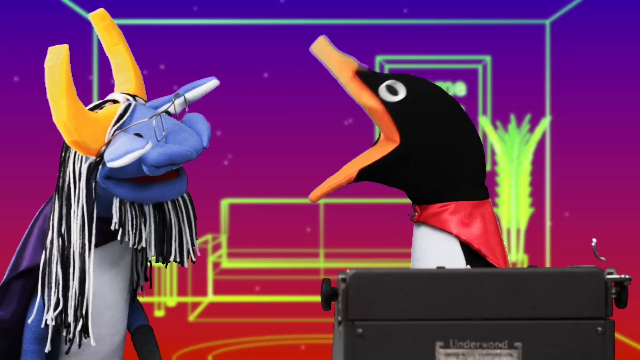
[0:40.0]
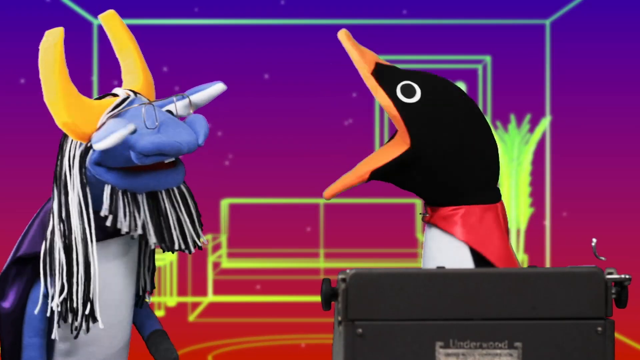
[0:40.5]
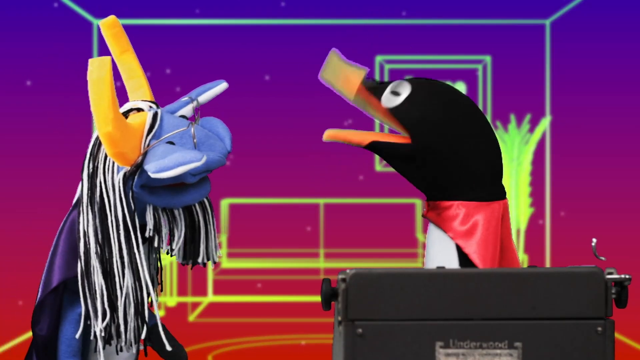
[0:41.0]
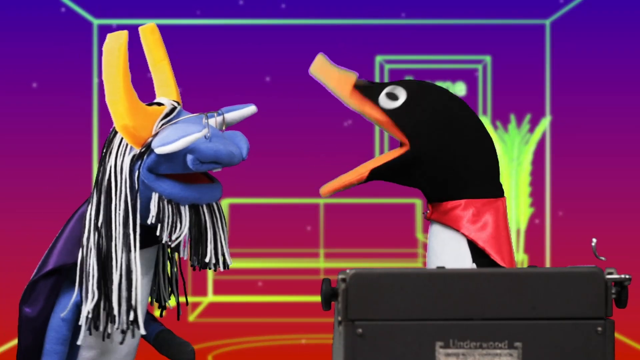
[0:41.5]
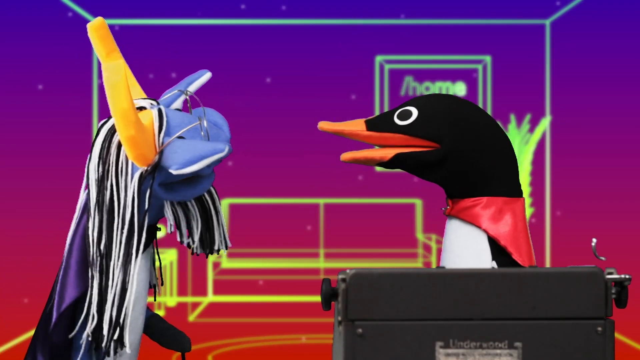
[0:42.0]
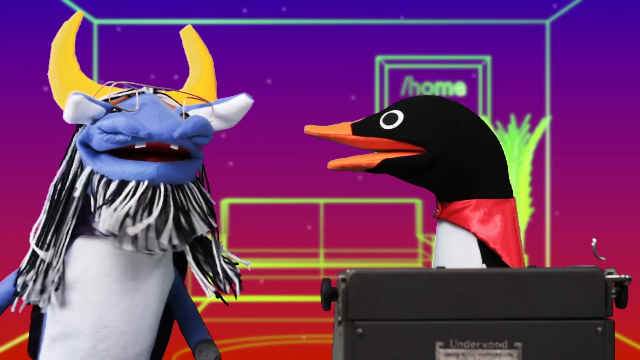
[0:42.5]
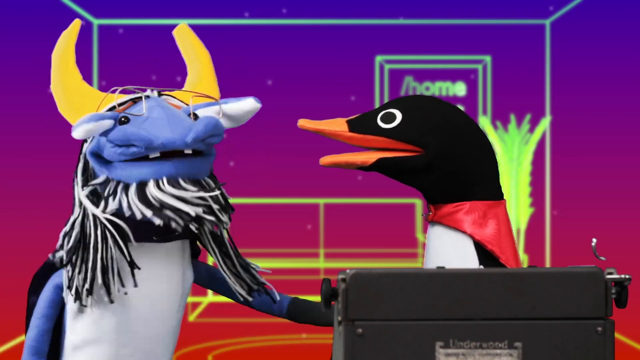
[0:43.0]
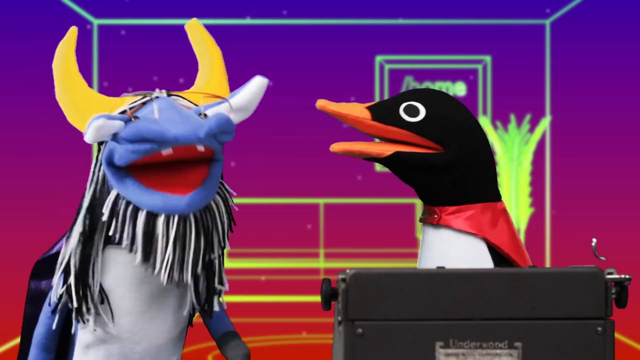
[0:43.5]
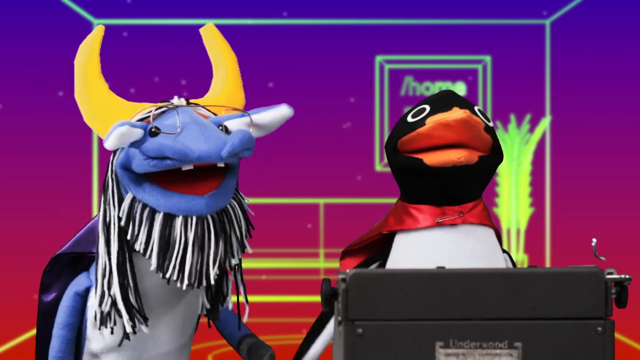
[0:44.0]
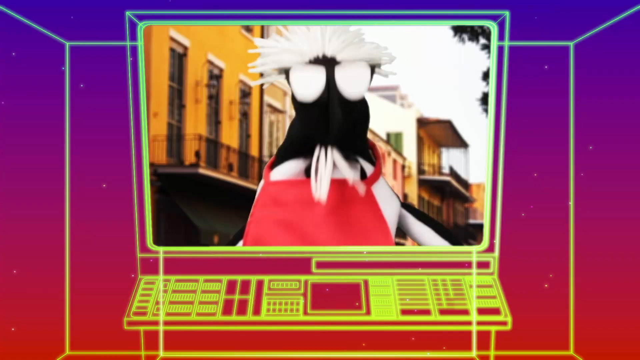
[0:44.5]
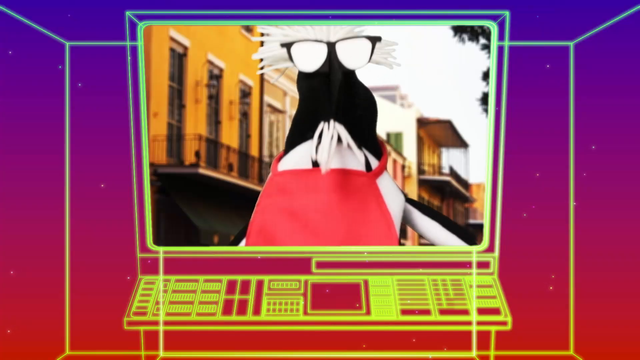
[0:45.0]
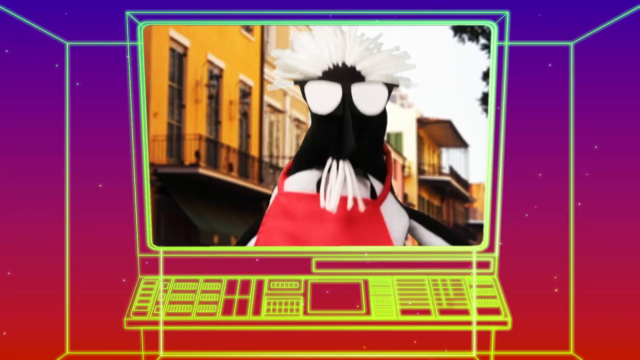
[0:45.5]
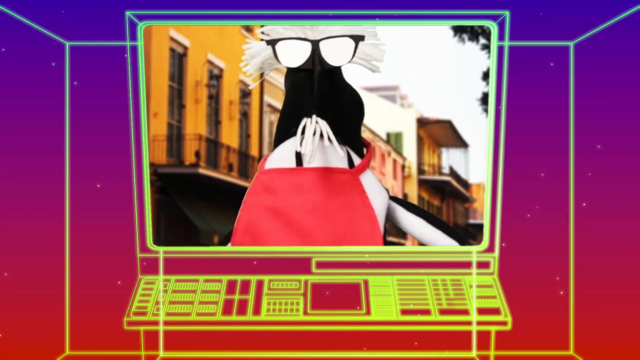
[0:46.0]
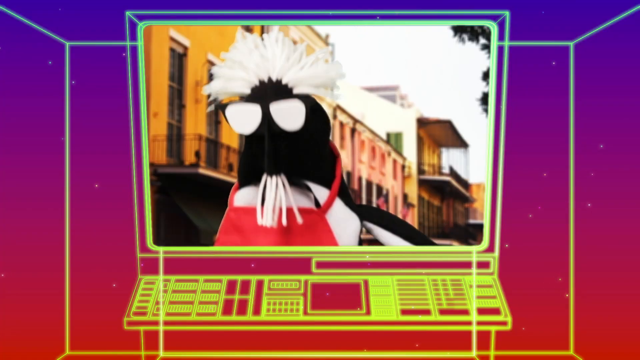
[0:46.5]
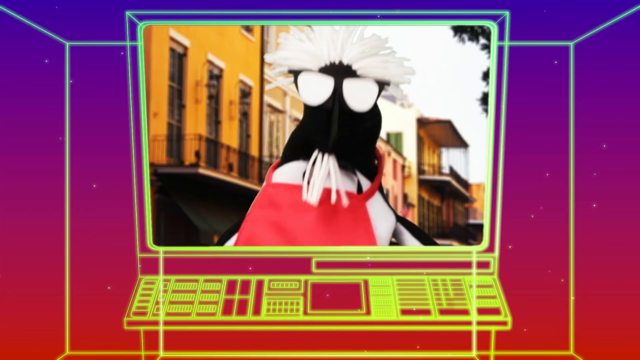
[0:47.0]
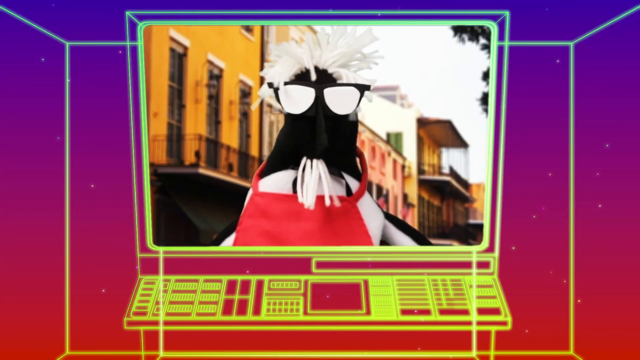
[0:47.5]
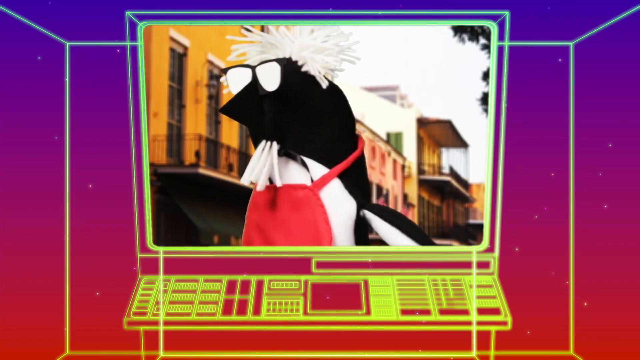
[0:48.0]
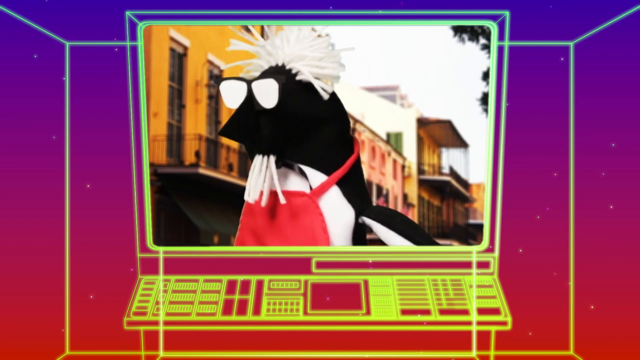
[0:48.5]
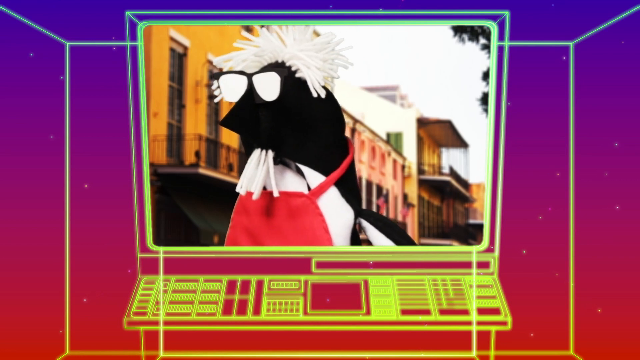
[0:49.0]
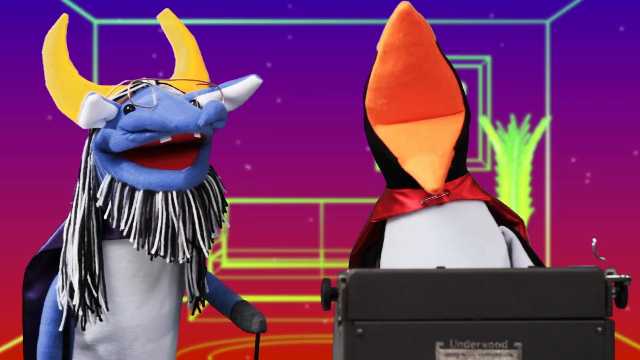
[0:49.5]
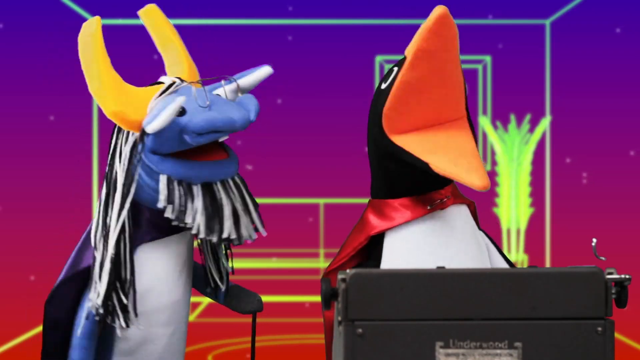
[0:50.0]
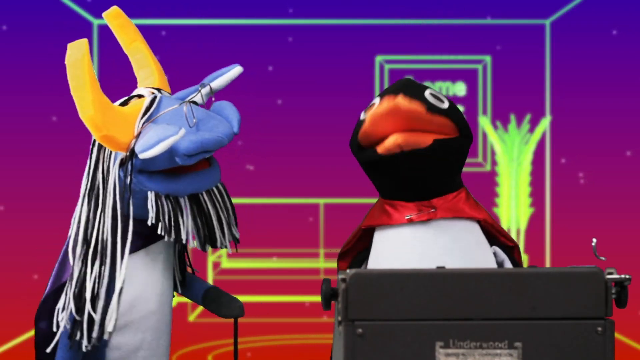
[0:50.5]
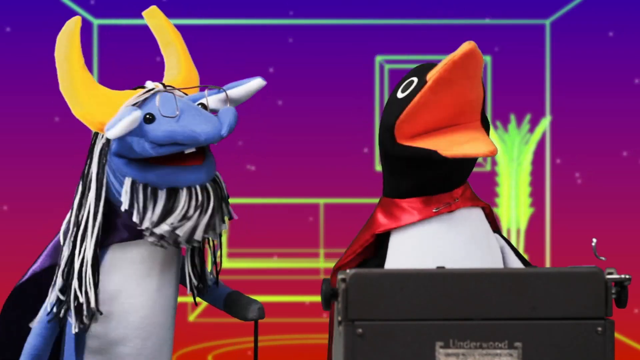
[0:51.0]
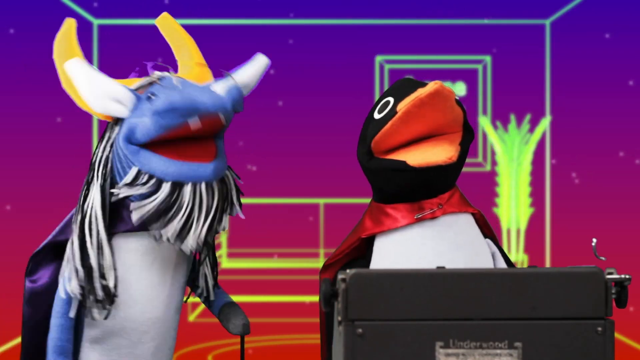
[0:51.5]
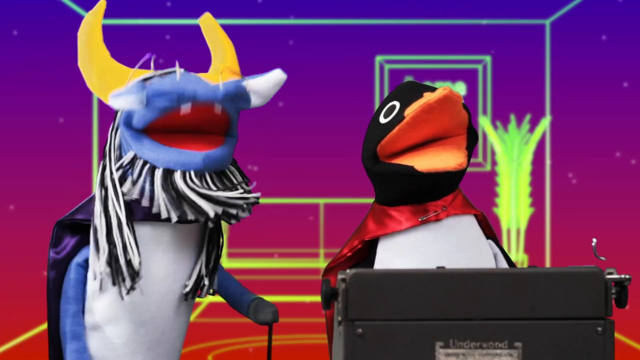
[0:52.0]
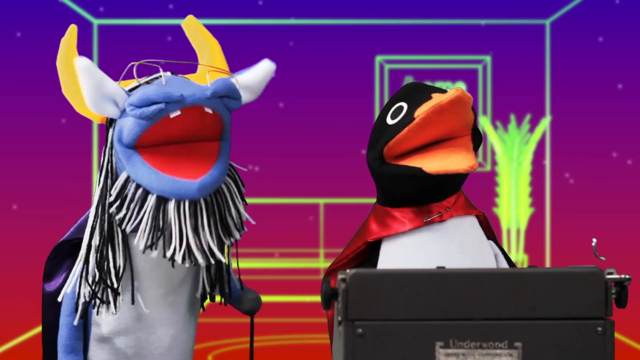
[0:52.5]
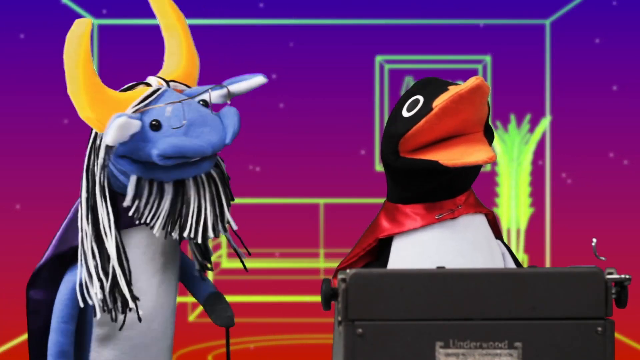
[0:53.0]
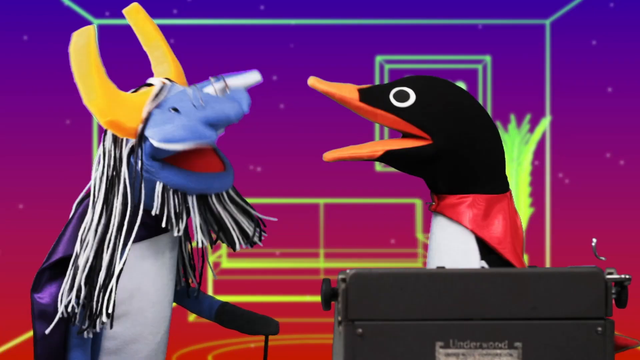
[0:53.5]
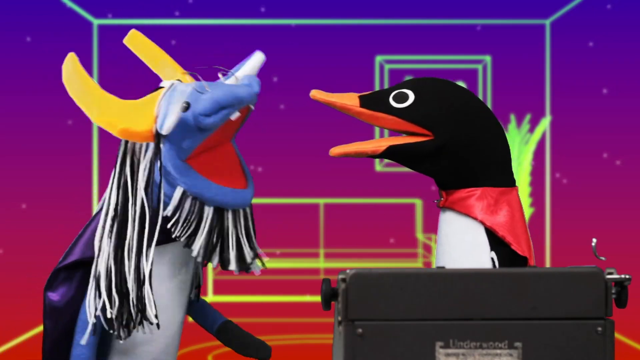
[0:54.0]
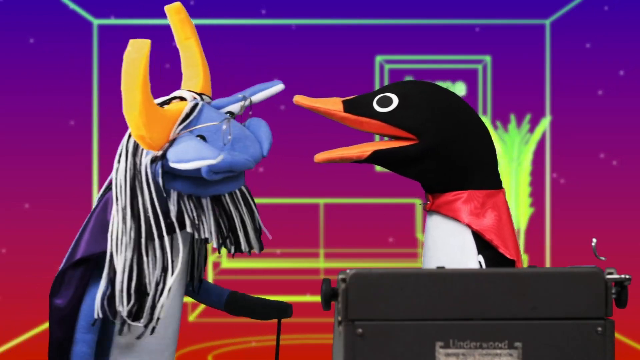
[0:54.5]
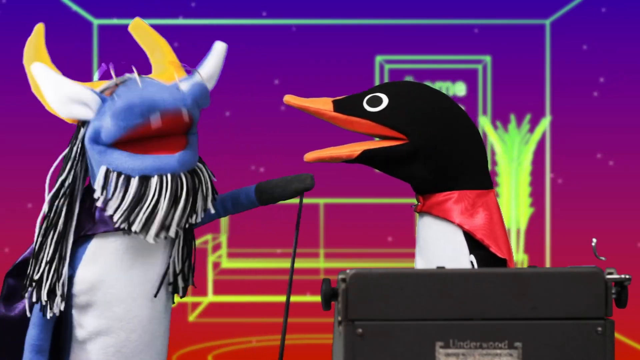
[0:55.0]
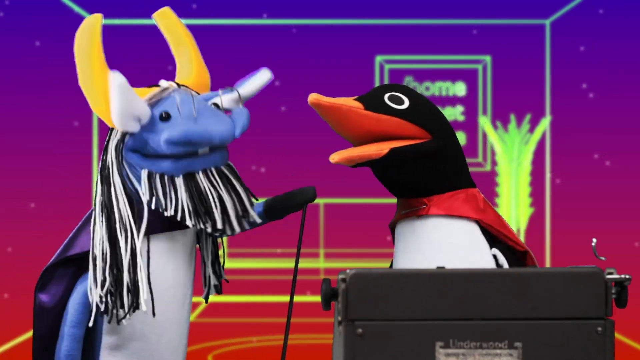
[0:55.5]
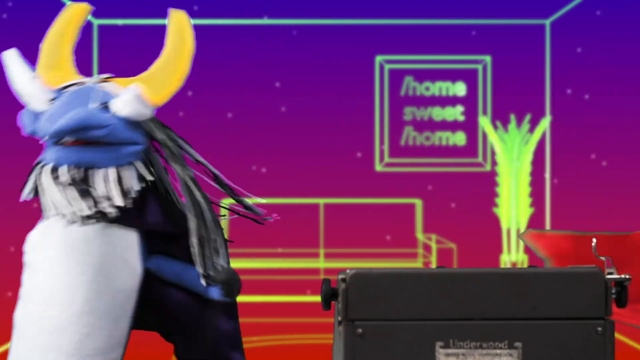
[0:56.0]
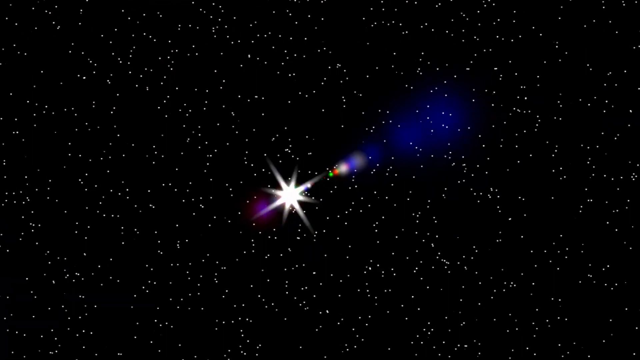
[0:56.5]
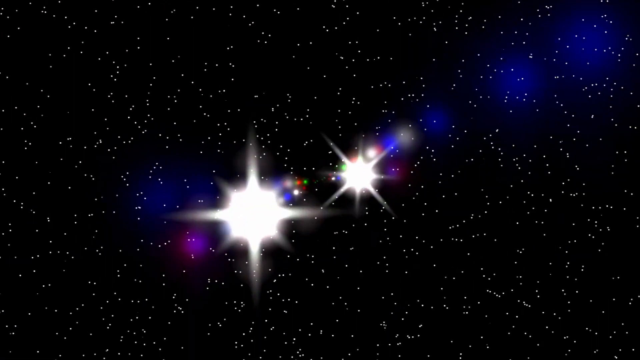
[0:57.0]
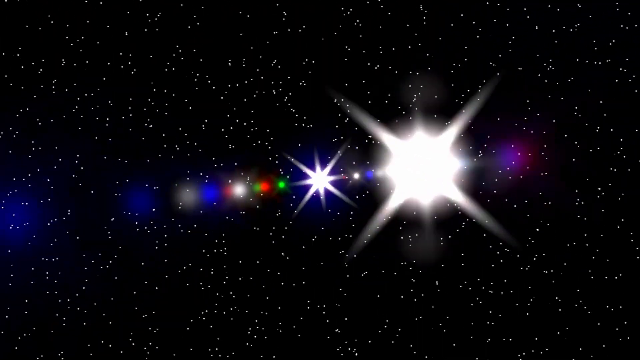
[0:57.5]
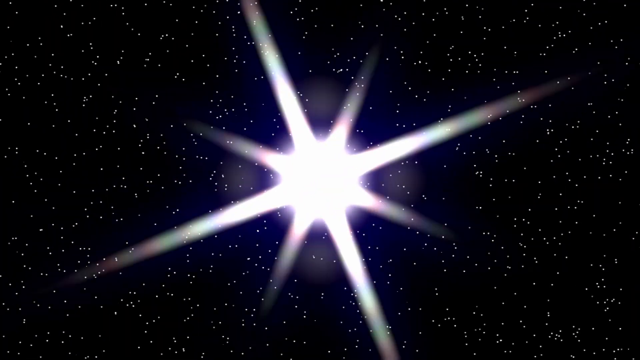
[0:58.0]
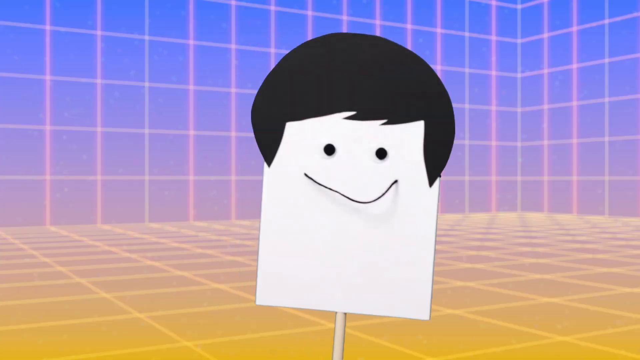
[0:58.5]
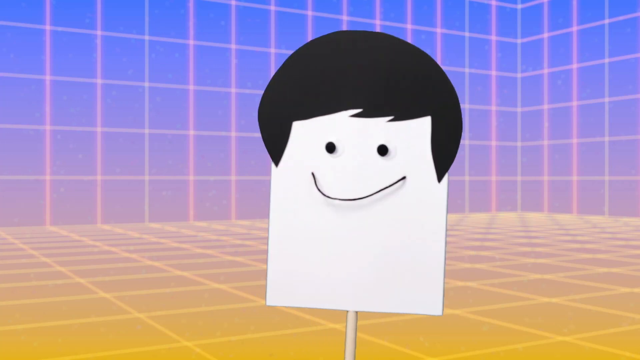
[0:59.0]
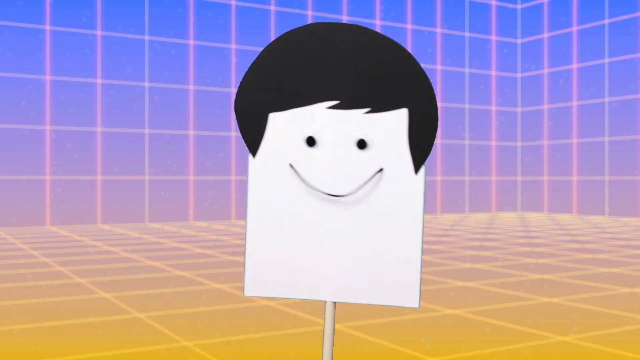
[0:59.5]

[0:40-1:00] The penguin and the gnu are standing together talking. The gnu is on the left; it has blue skin, wears glasses, and has long hair made of white and black strands of yarn hanging down, plus yellow horns. The penguin is on the right, its mouth opening and closing as if talking, standing behind a typewriter and wearing a red cape. The gnu then turns to face the camera and opens its mouth, showing a red inside and two teeth on its upper jaw. Another puppet appears that is hard to identify; it looks like it might be a penguin wearing a black hood over its head and a red apron, and its head nods up and down as it speaks.